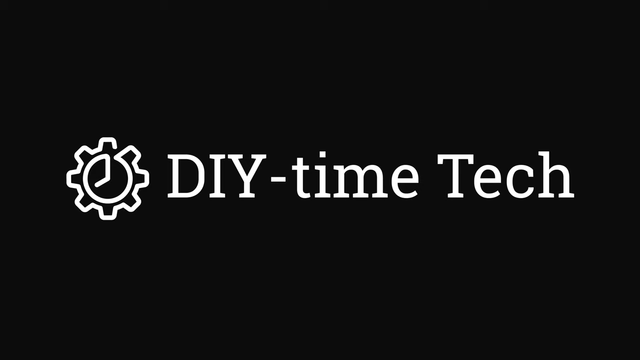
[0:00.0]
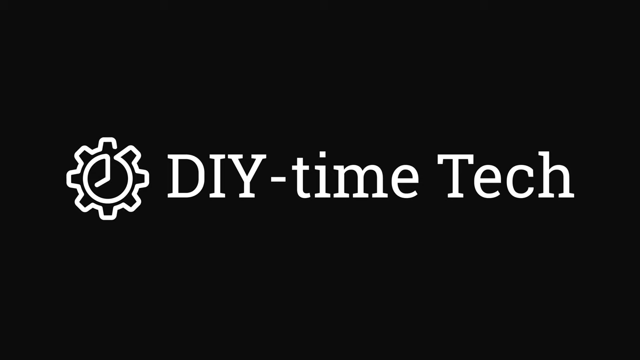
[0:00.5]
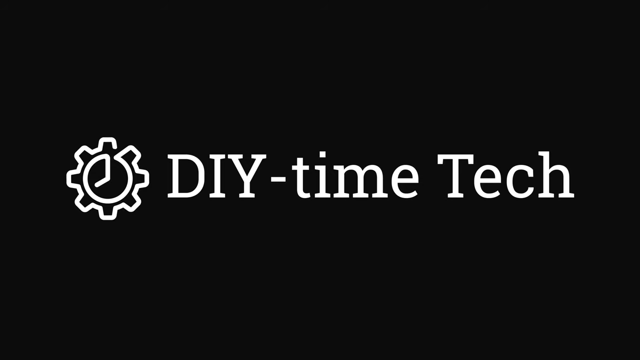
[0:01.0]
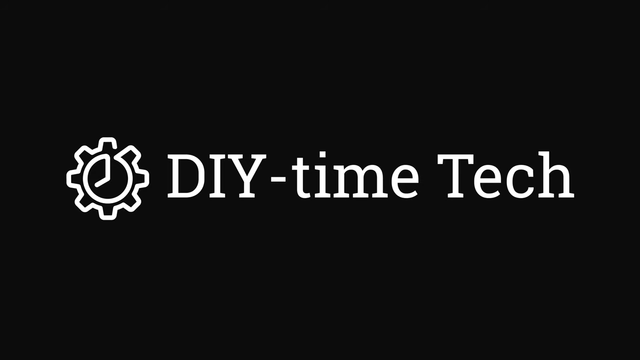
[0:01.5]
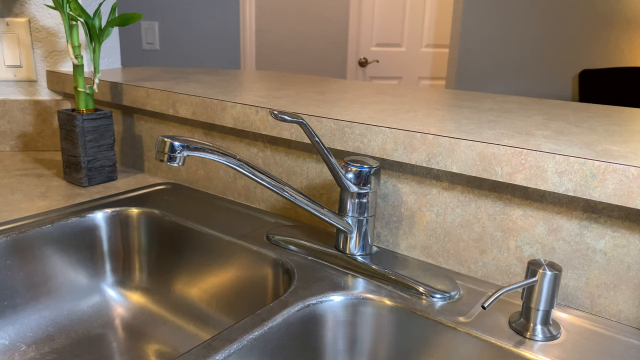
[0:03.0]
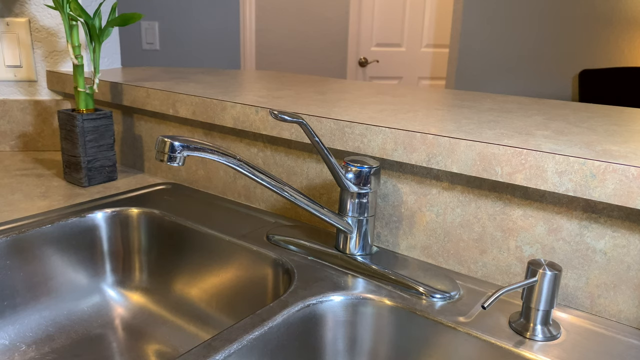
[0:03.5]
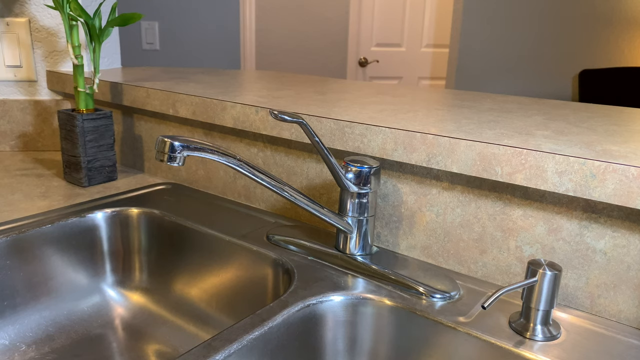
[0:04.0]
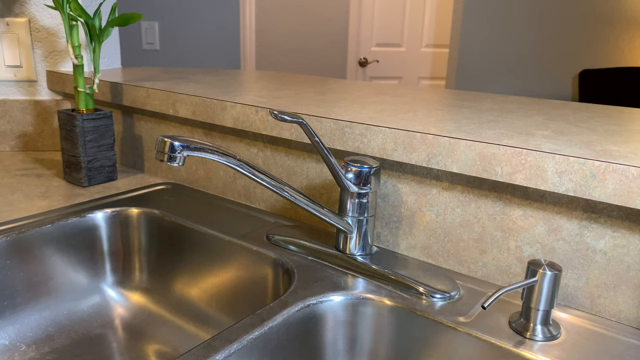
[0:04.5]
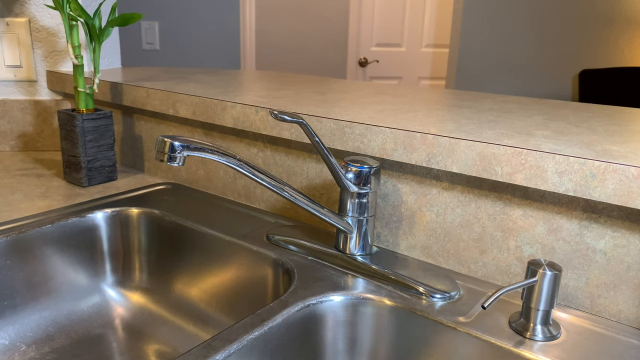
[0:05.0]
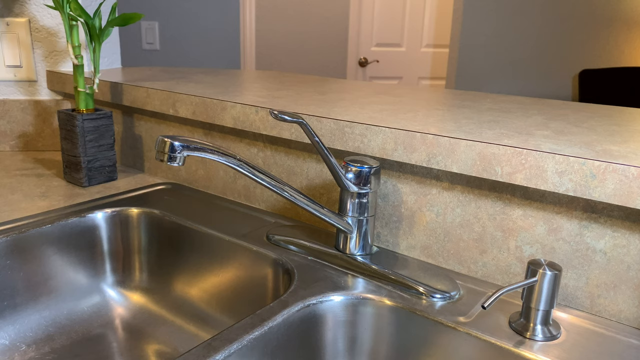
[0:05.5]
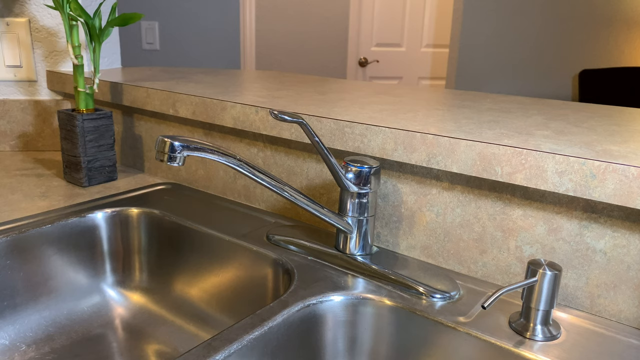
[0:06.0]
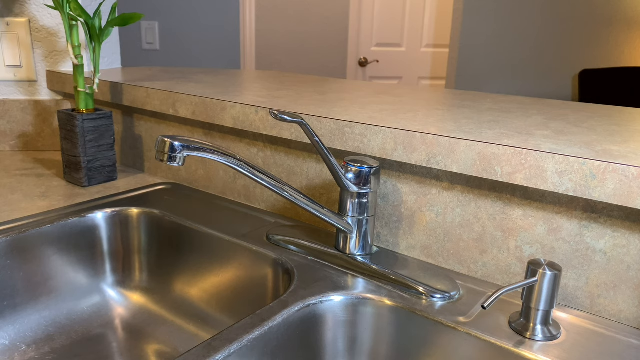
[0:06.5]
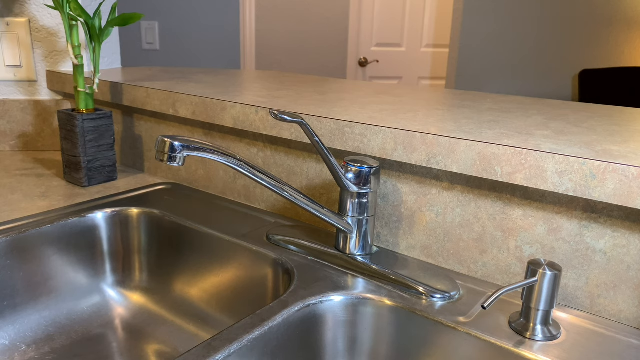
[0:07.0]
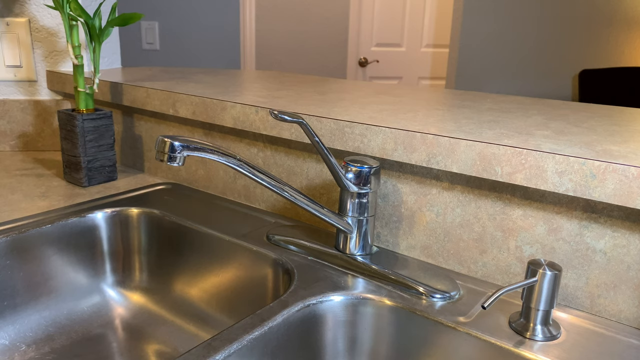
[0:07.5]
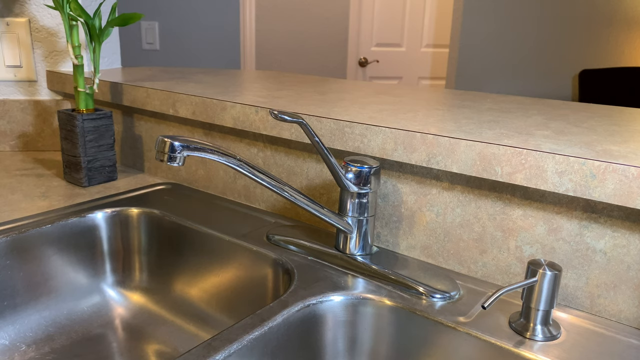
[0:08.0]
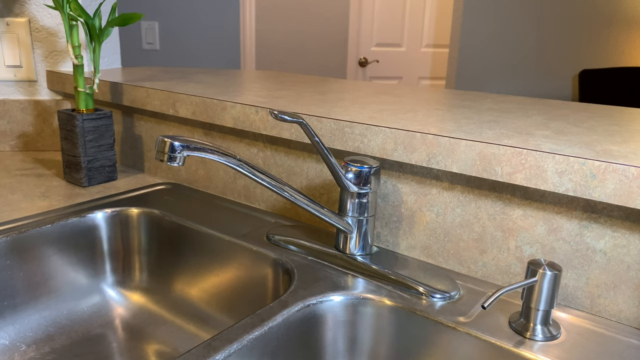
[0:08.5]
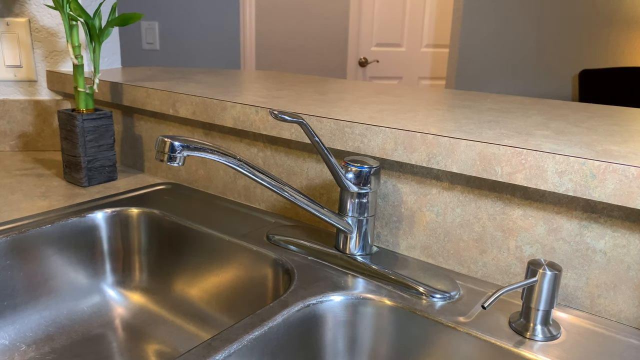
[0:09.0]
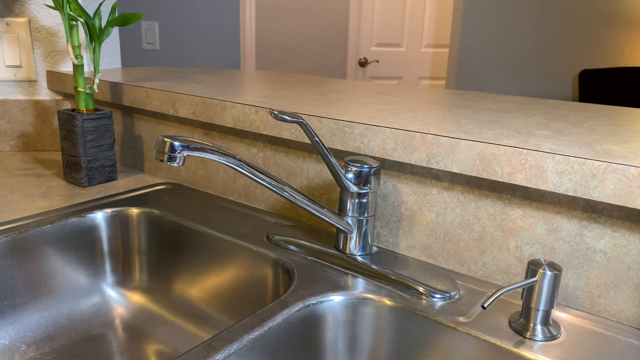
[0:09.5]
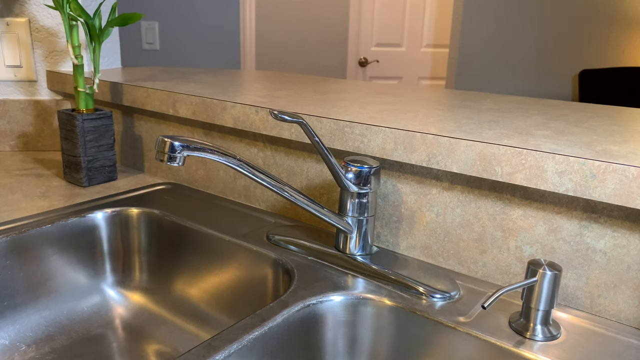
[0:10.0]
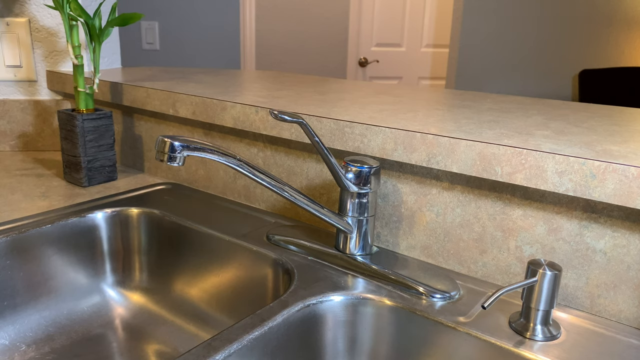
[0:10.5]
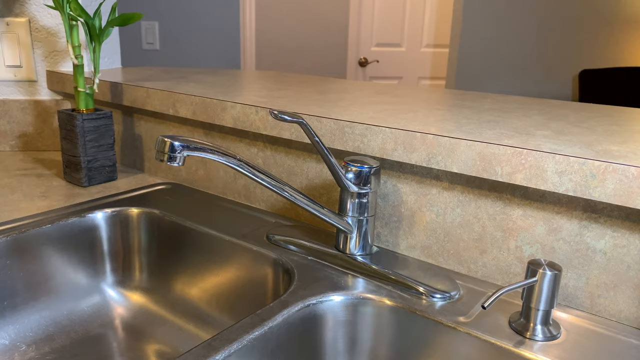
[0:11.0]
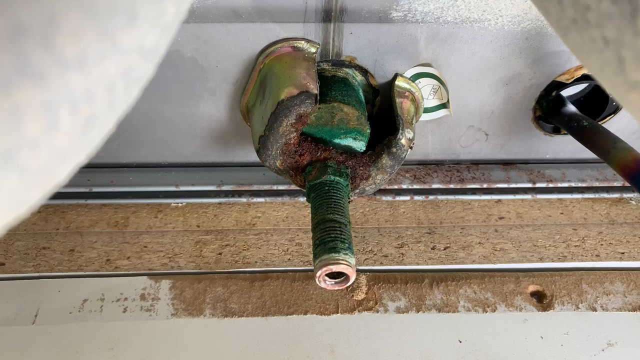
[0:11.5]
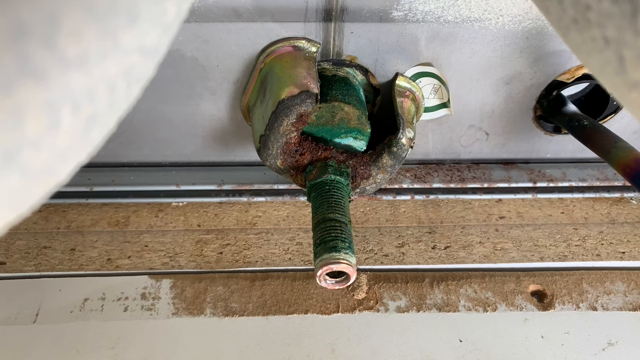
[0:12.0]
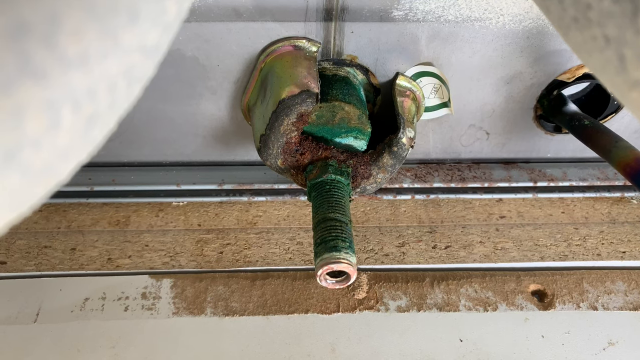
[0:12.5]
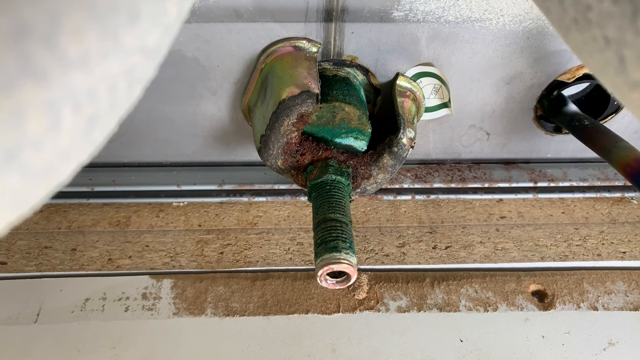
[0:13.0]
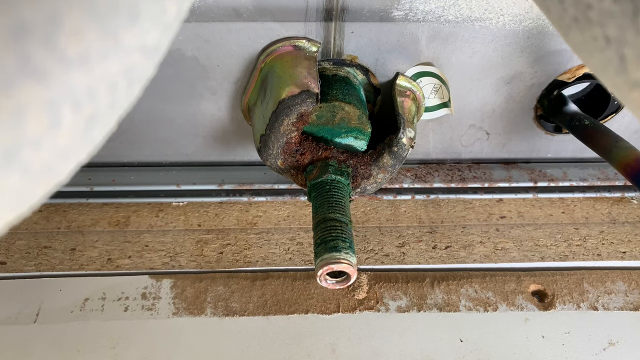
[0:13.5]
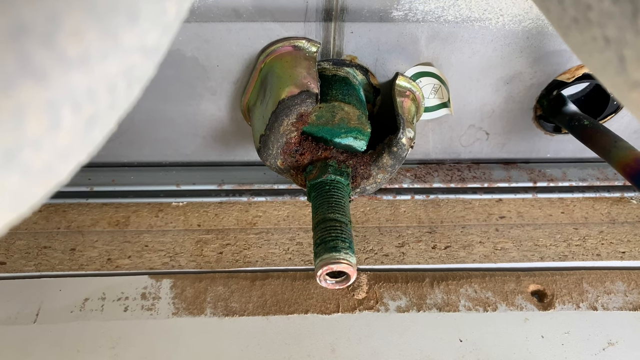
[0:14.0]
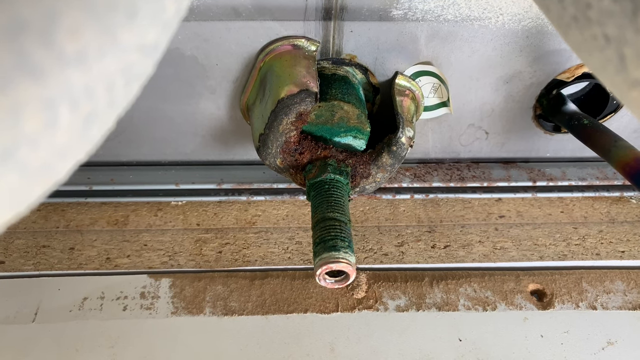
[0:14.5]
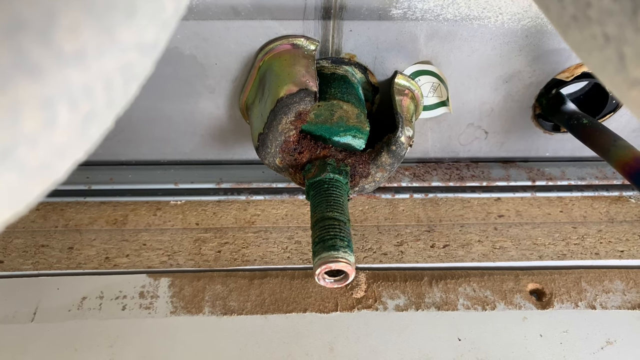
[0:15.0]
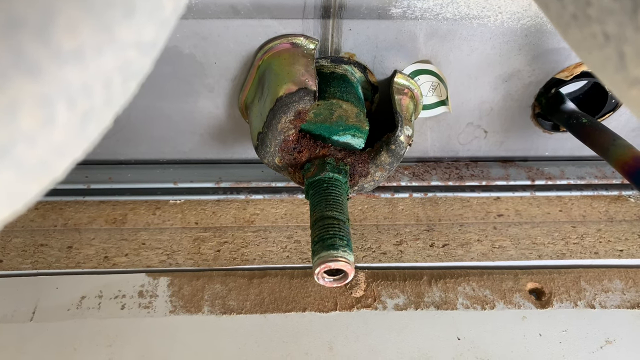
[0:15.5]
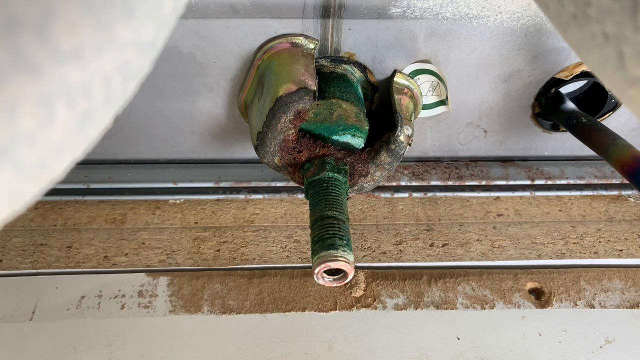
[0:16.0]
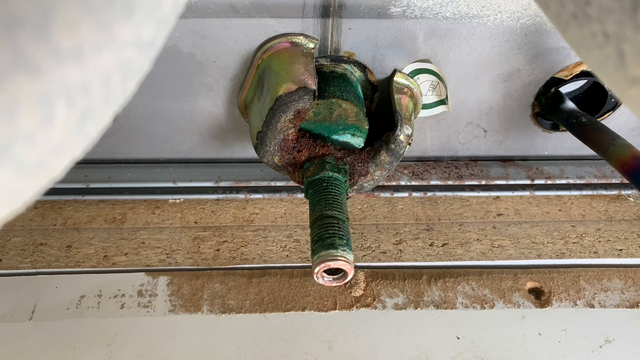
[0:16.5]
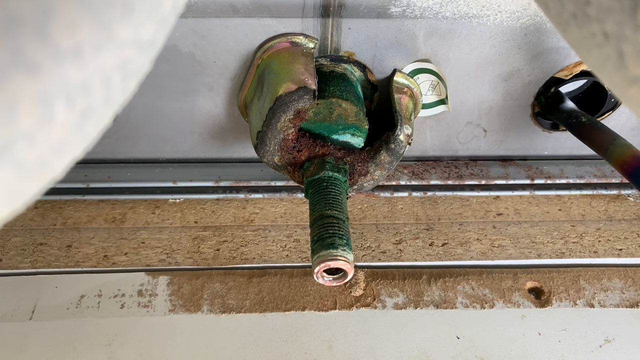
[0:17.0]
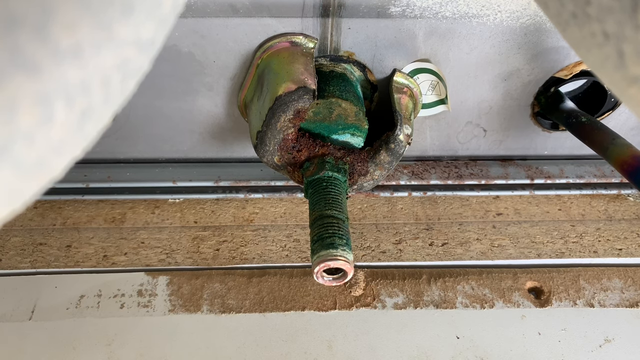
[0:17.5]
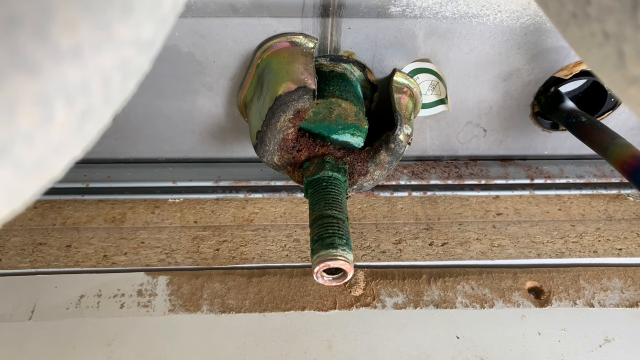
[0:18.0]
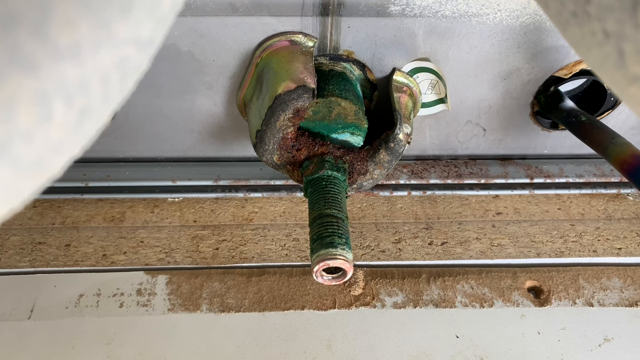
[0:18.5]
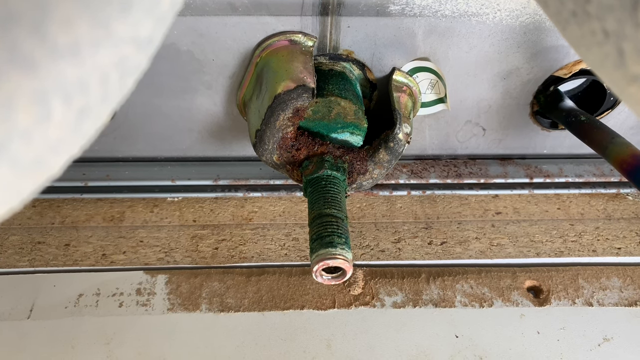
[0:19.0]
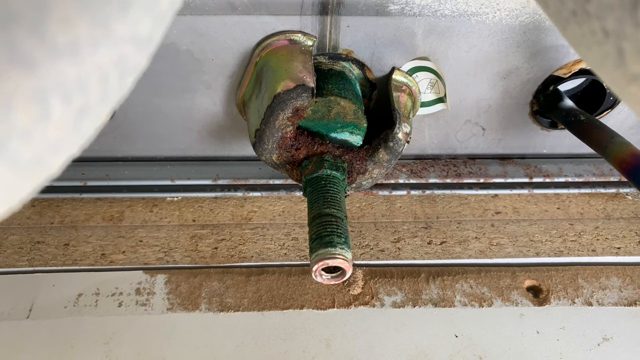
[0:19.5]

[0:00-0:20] The video opens on a completely black screen. Across the centre, slightly indented from the left, is a symbol that looks like a kind of cog or spanner with a clock face in its centre; the minute hand points to 12 and the hour hand to around 8. To the right of it is white text reading "DIY Time Tech", with "DIY" in capitals followed by a dash, "time" in lowercase, and "Tech" with a capital T and lowercase "ech". The scene then changes to an image of a sink mixer tap, or faucet, at the back of a stainless steel sink in which it is embedded. It has a long arm where the water is dispensed, pointing out to the front, and another arm towards the top for turning the water on and adjusting it between hot, cold or mixed. The sink has two bowls, with the faucet in the centre and the bowls in front of it on the left and right. Behind the faucet is a backboard in a light brown, fawn colour, and behind that some sort of living area can be seen. In the top left corner of the image is a plant pot with some sort of indoor plant with waxy leaves, on an otherwise empty piece of worktop.